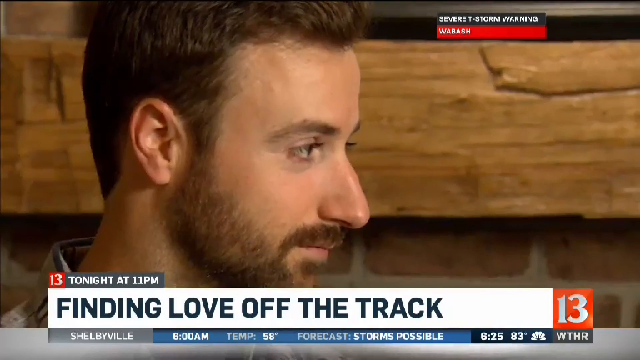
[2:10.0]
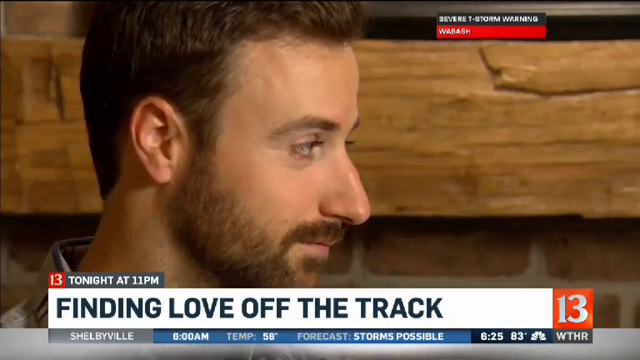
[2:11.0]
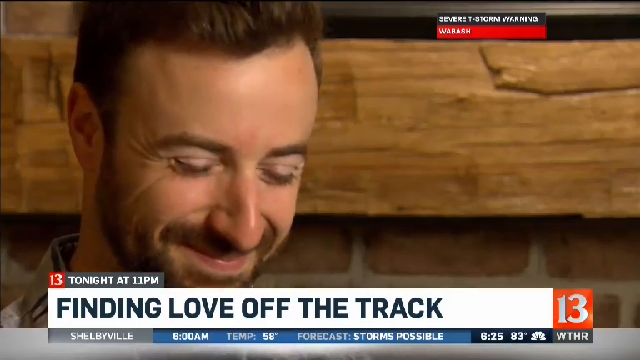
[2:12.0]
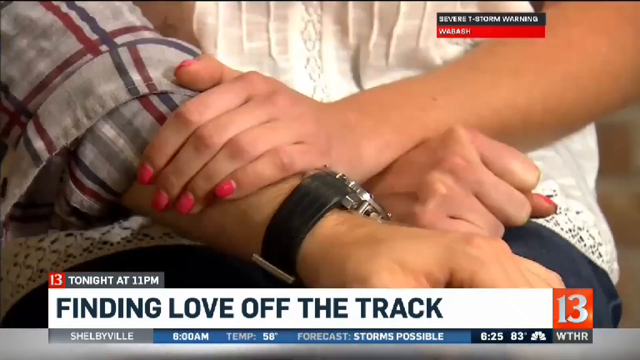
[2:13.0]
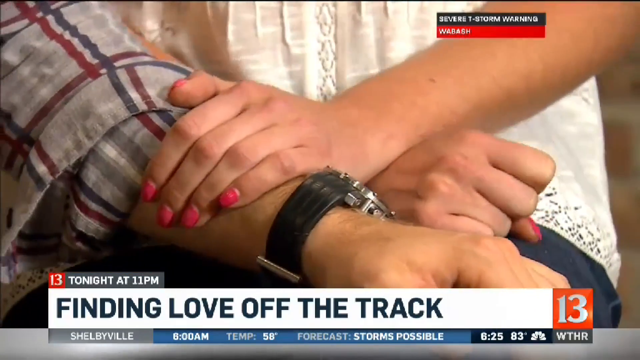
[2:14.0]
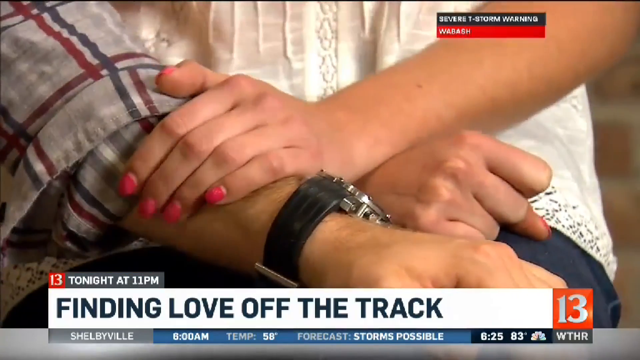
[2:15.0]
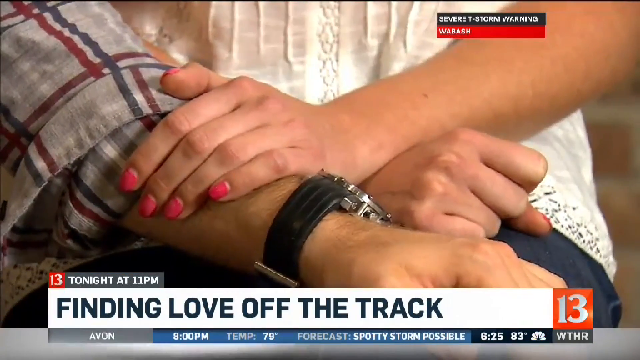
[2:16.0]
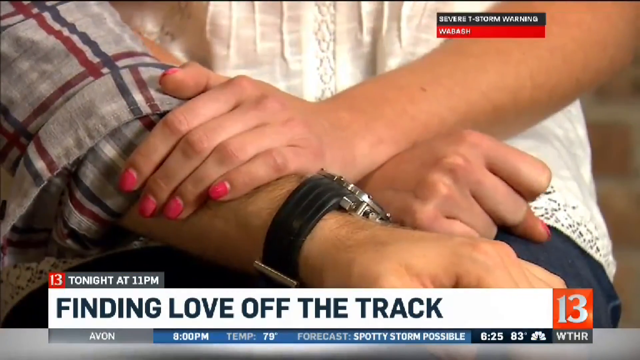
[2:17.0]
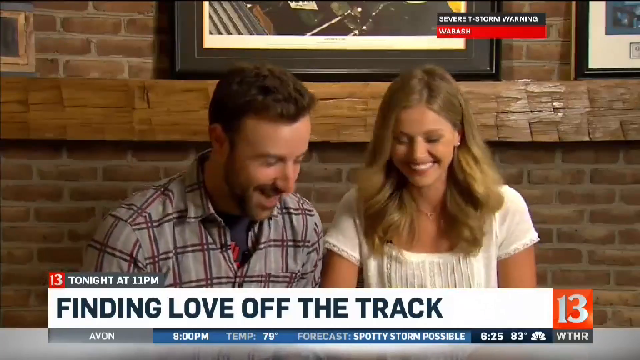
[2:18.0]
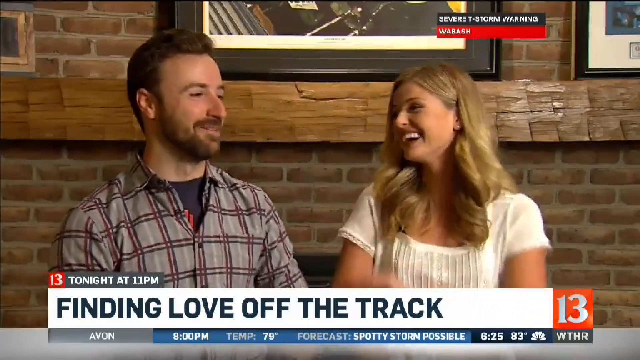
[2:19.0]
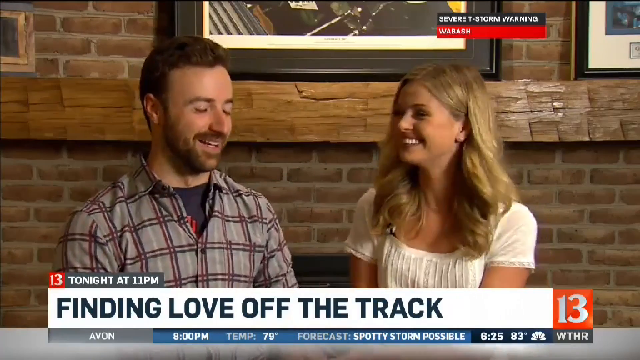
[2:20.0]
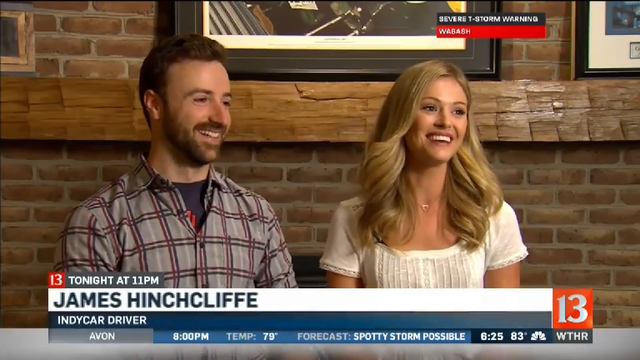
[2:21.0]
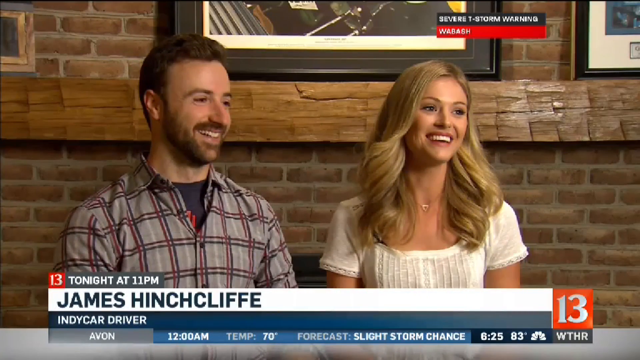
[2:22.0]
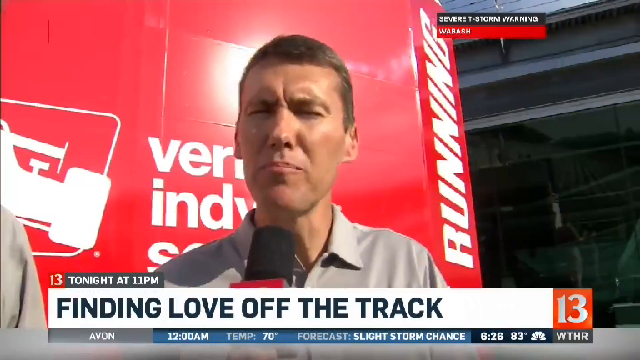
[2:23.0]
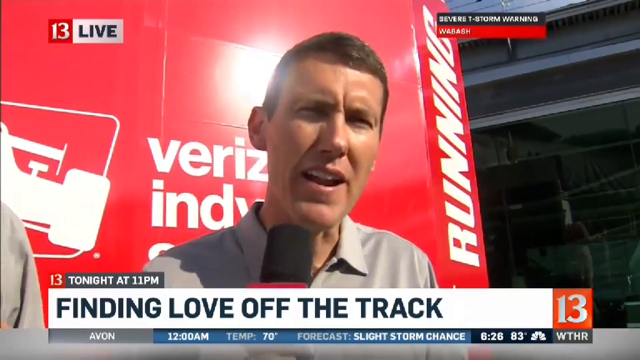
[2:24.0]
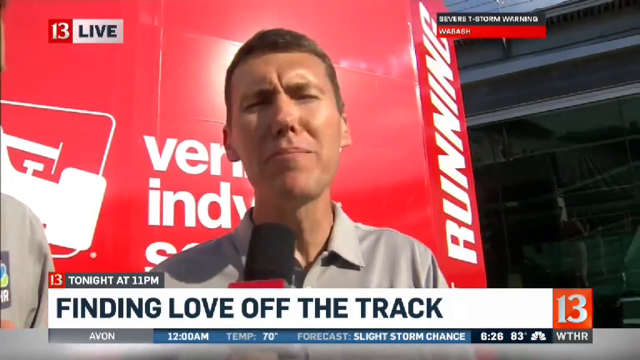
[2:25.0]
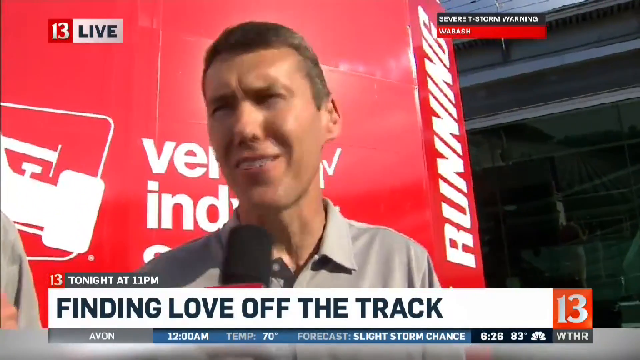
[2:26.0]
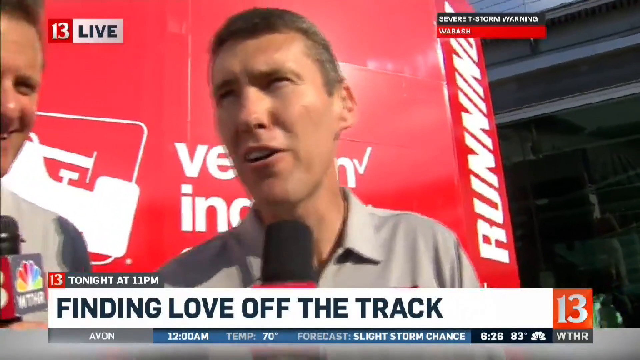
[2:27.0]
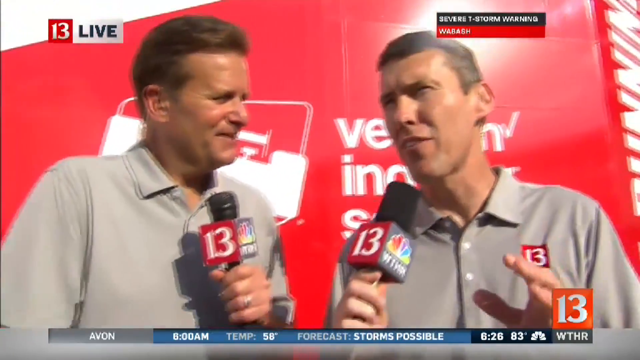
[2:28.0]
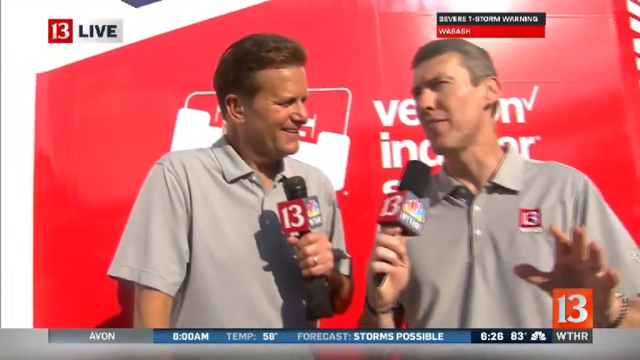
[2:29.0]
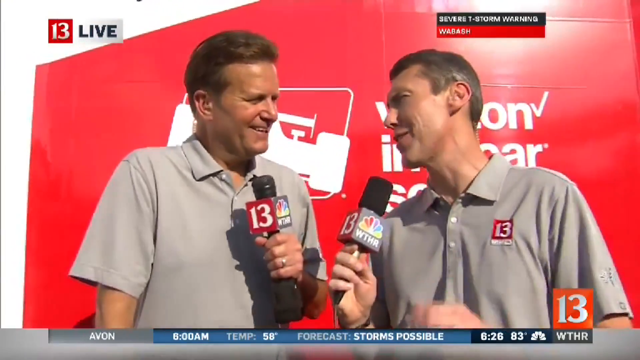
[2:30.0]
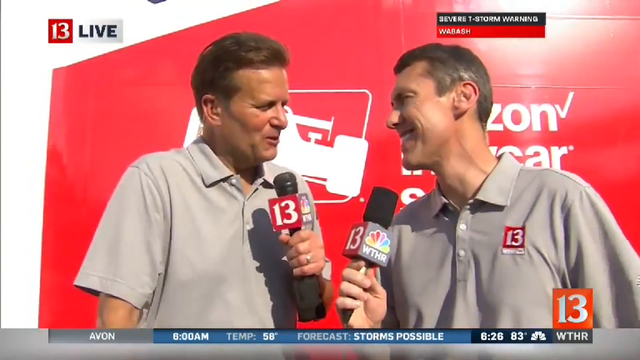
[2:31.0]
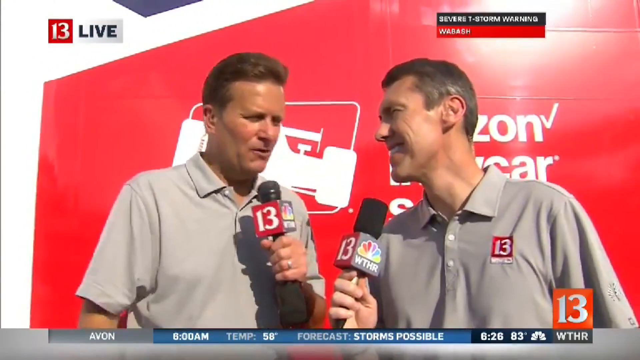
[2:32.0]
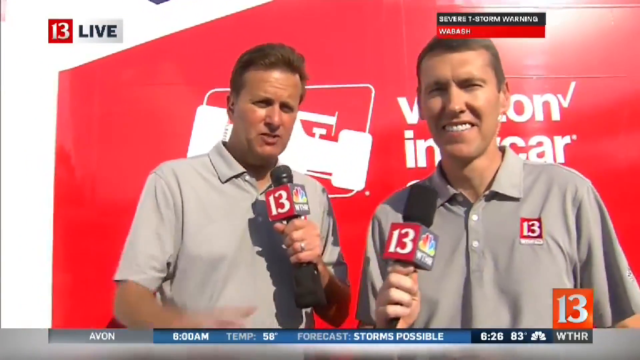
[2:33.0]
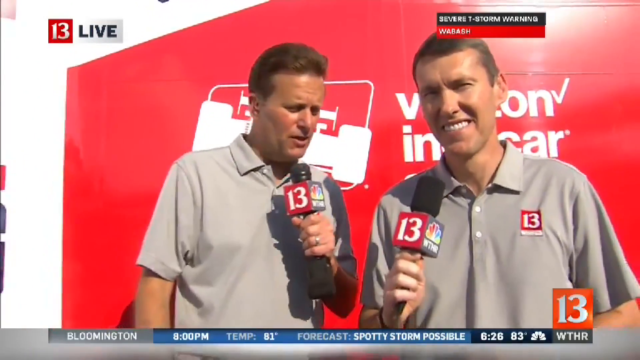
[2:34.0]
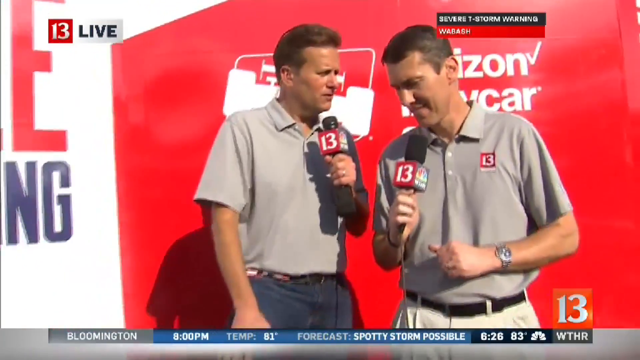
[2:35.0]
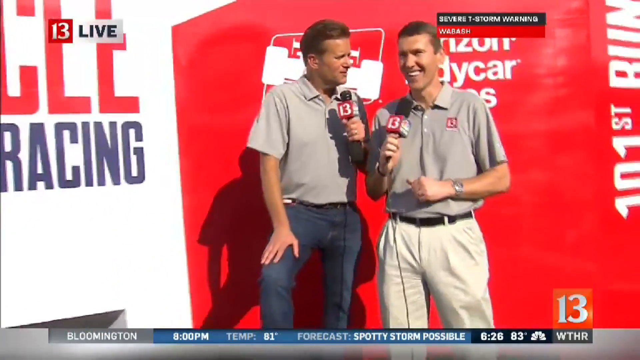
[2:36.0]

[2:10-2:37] A close-up shows Hinchcliffe's face while the banner reads "Finding Love off the track", followed by a close-up of his arm, on which he wears a watch, as his girlfriend Rebecca Dalton, the blonde girl beside him, puts her hand on his arm. The two laugh and talk for a bit. The video returns to reporter Rich Nye at the Indianapolis Motor Speedway in his grey shirt with his microphone; as he talks, the camera turns a bit to show the other reporter, Dave Calabro. The camera zooms out for a view of them from afar, showing that the report is being communicated to the WTHR studios, where Anne-Marie Tiernon and John Stehr are.